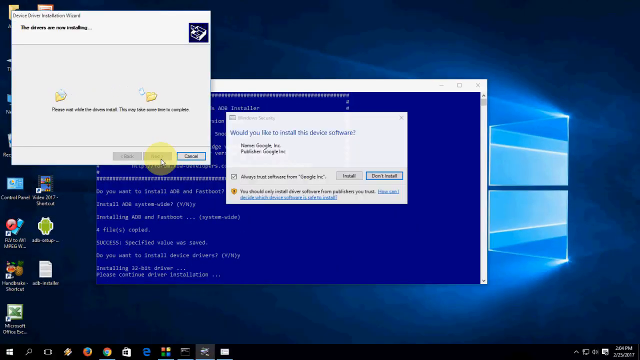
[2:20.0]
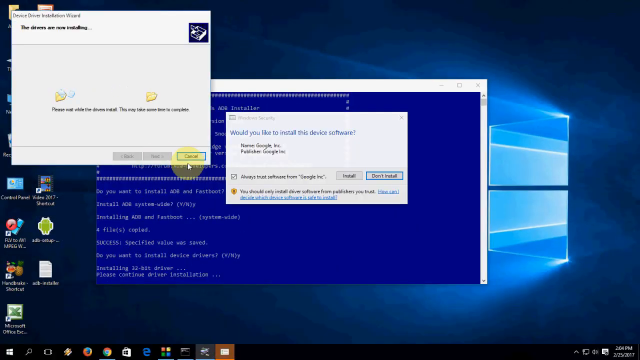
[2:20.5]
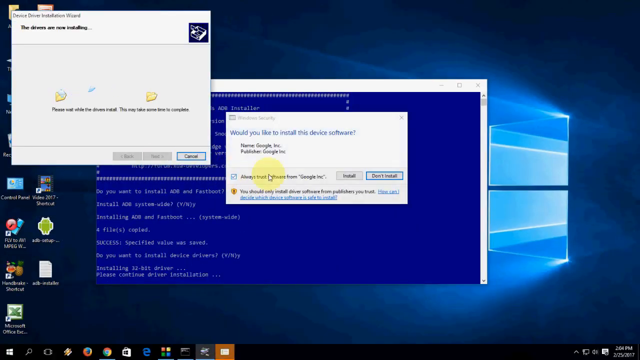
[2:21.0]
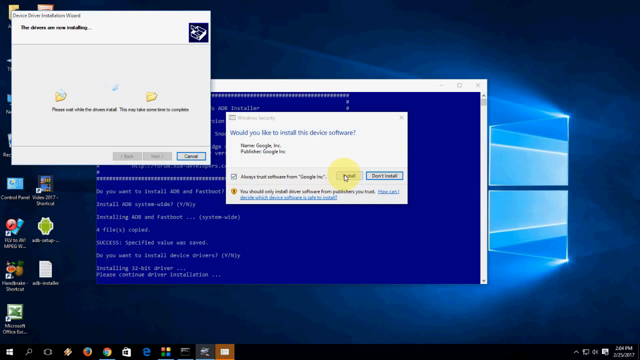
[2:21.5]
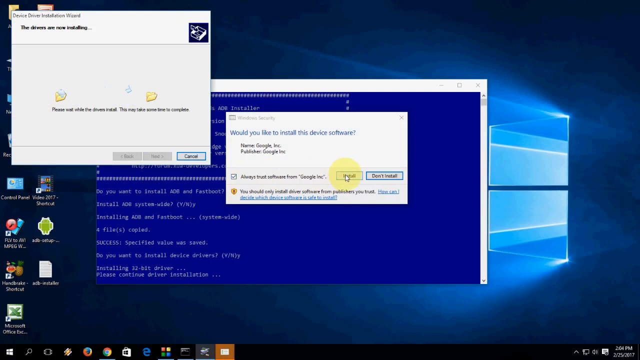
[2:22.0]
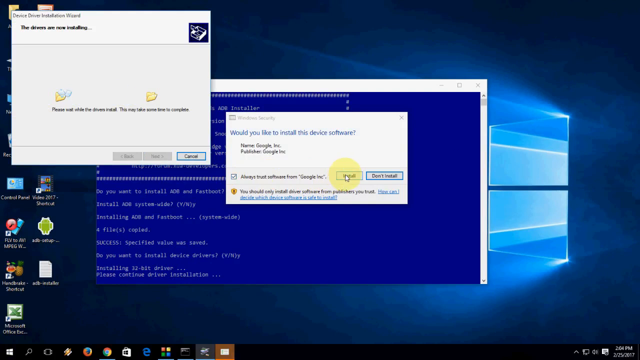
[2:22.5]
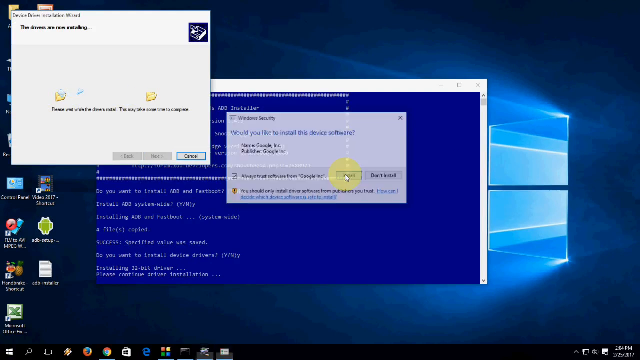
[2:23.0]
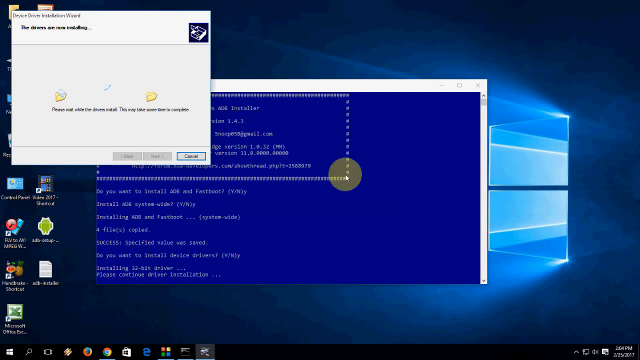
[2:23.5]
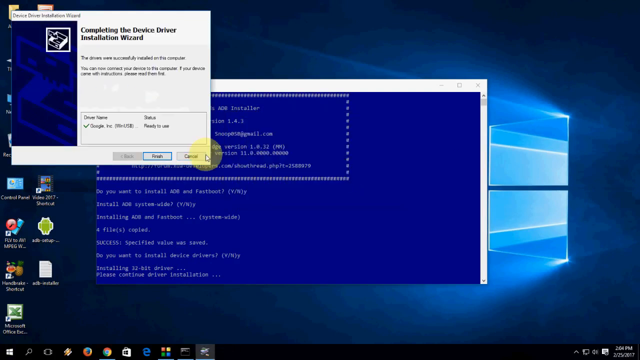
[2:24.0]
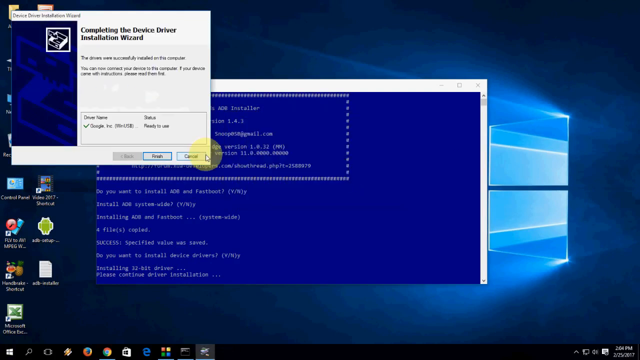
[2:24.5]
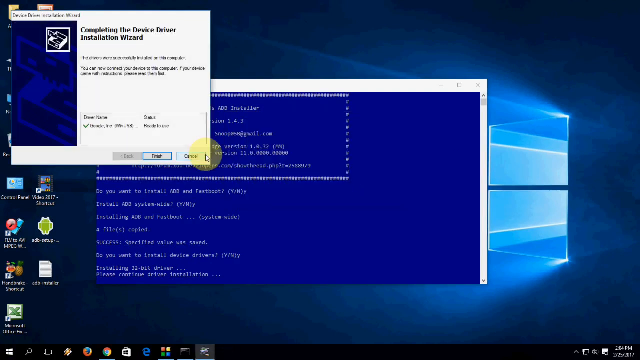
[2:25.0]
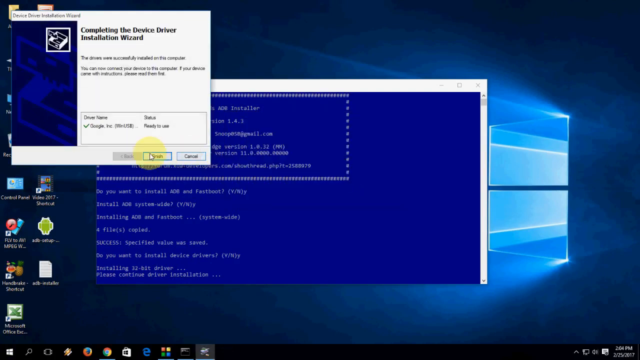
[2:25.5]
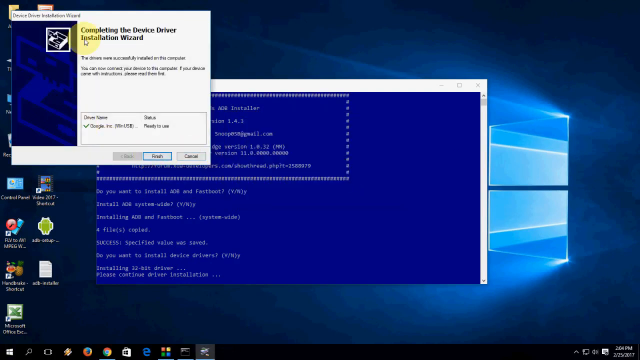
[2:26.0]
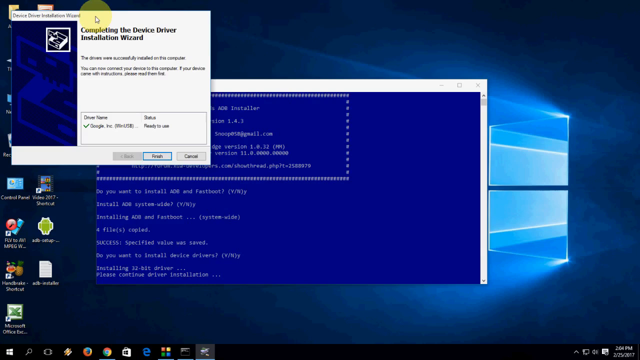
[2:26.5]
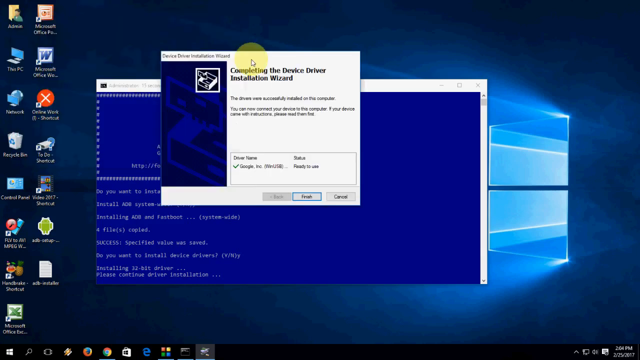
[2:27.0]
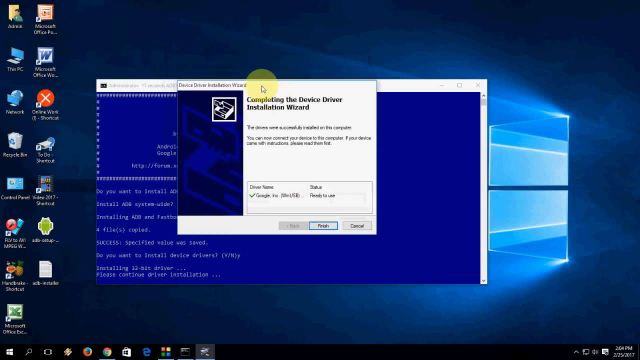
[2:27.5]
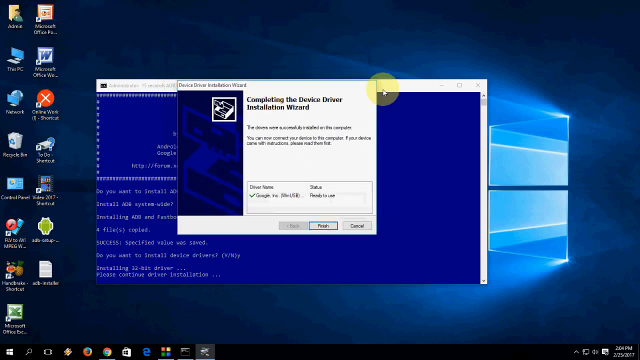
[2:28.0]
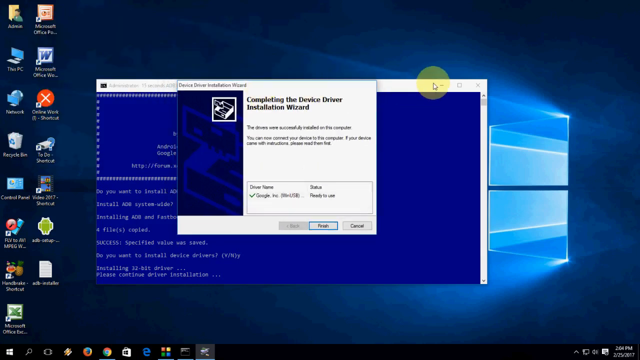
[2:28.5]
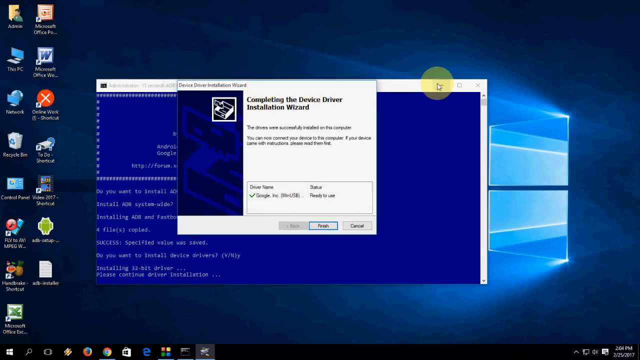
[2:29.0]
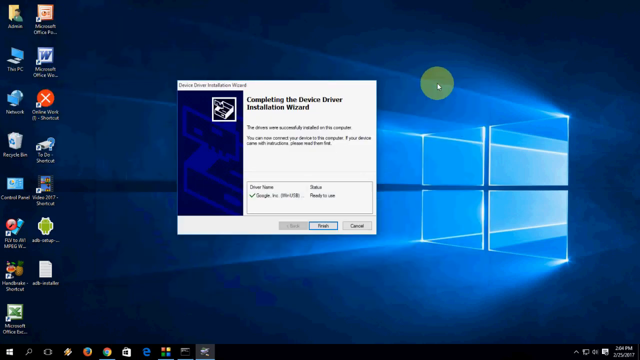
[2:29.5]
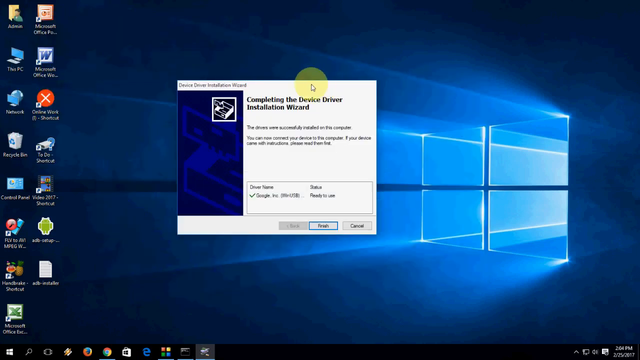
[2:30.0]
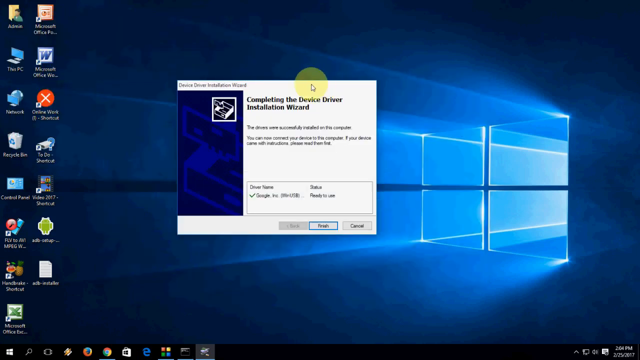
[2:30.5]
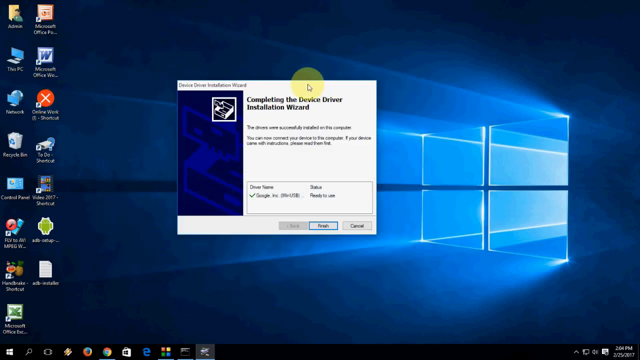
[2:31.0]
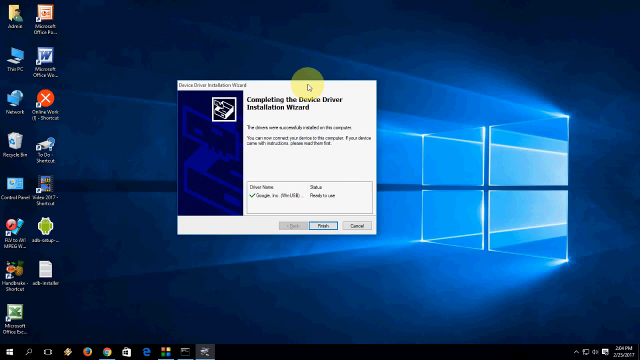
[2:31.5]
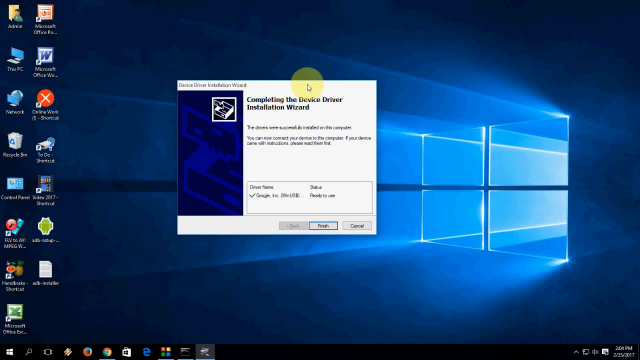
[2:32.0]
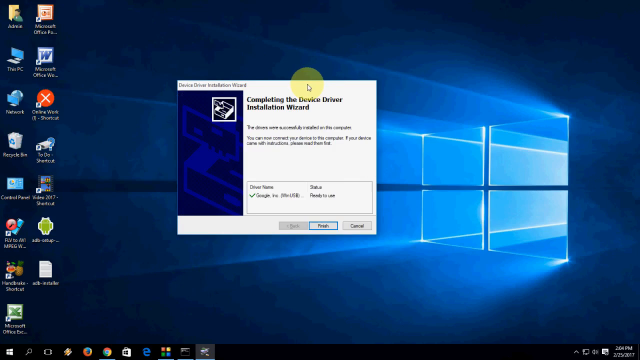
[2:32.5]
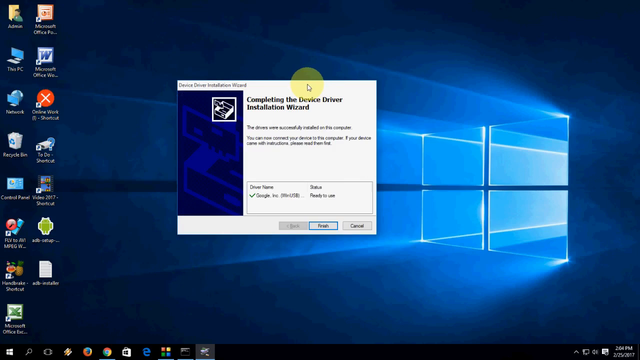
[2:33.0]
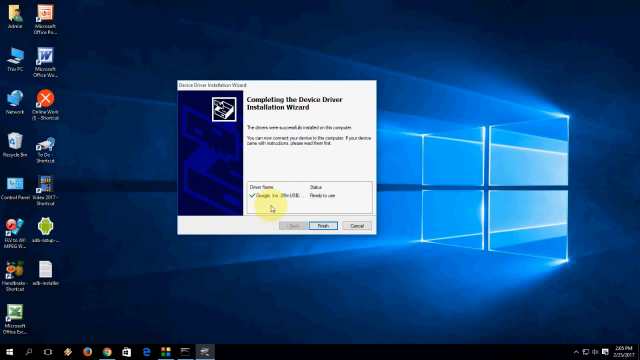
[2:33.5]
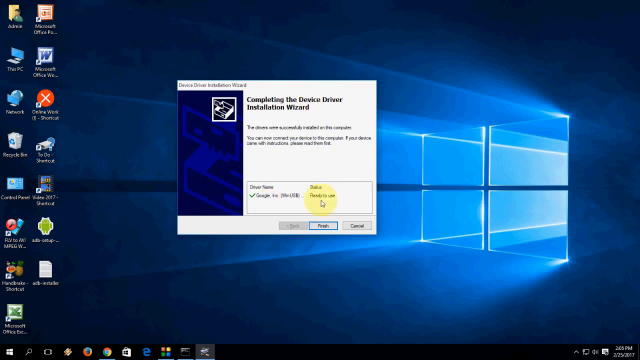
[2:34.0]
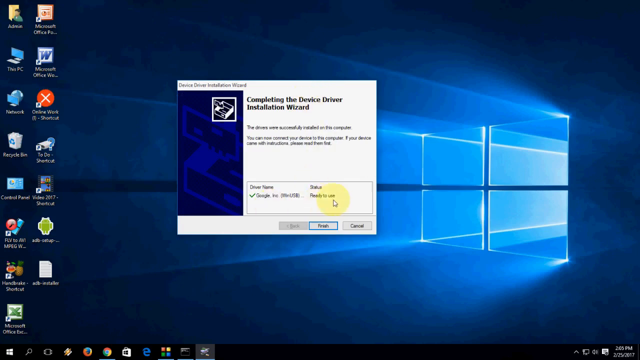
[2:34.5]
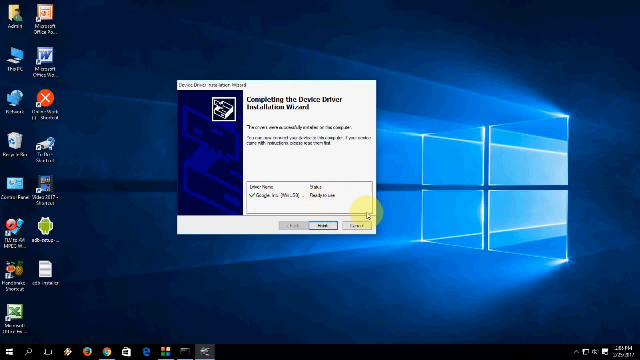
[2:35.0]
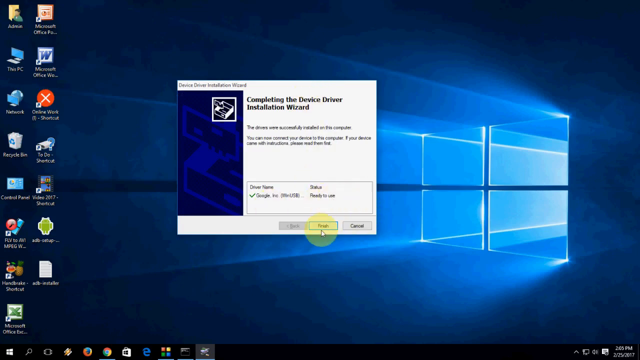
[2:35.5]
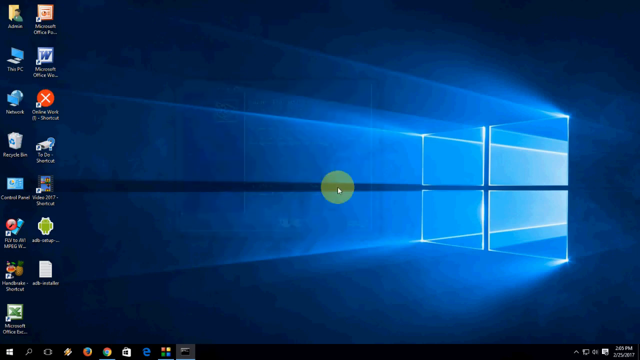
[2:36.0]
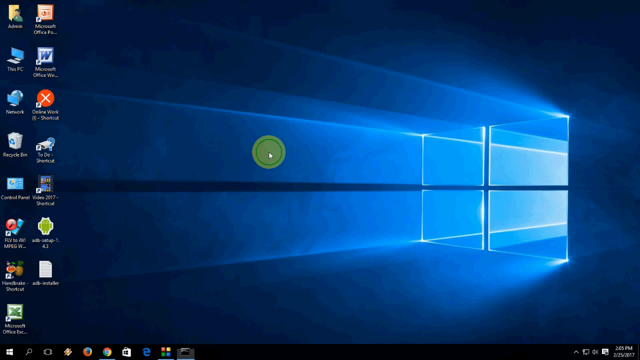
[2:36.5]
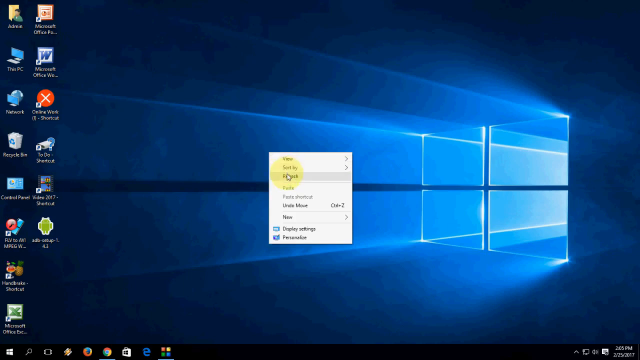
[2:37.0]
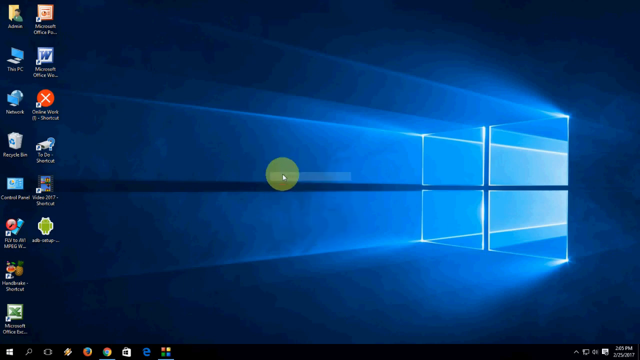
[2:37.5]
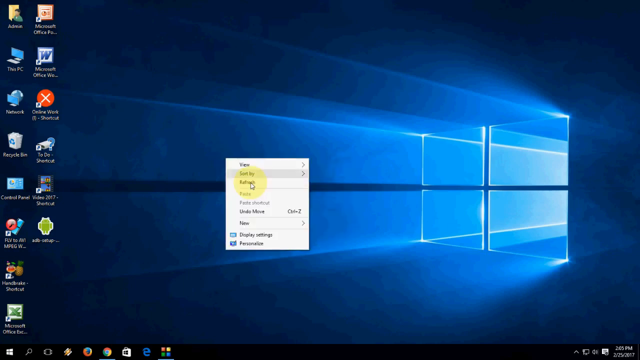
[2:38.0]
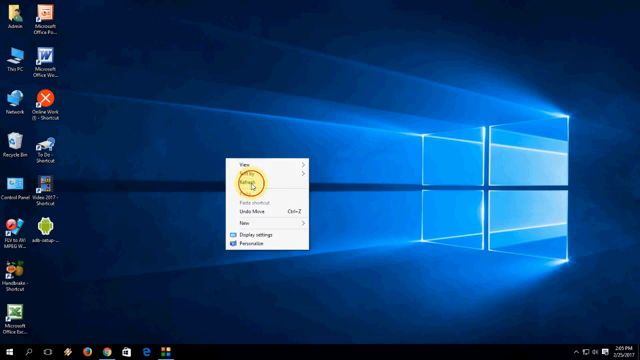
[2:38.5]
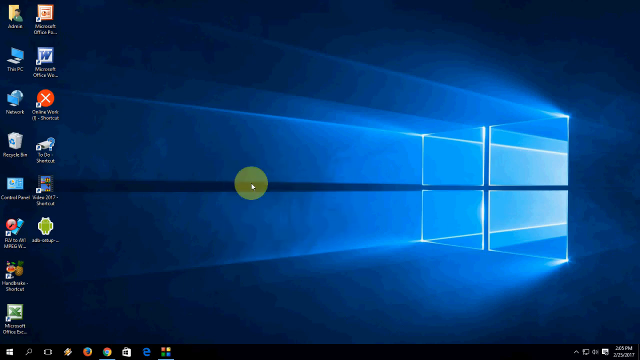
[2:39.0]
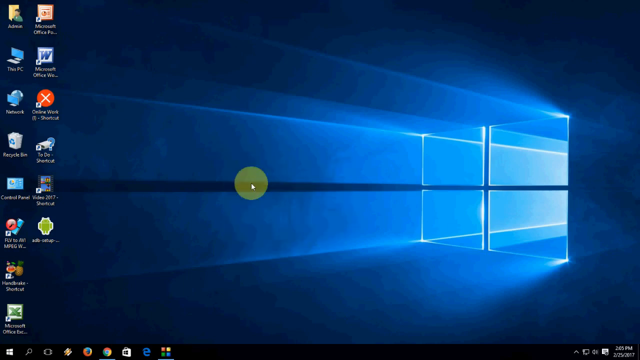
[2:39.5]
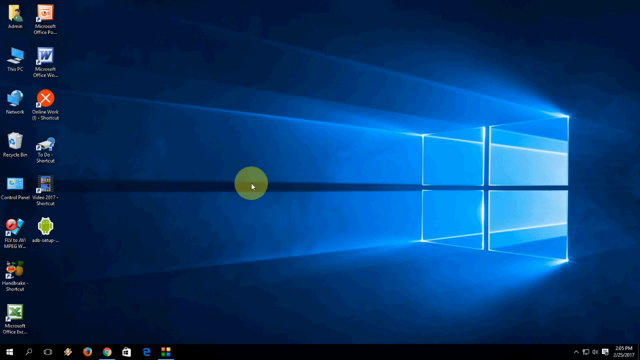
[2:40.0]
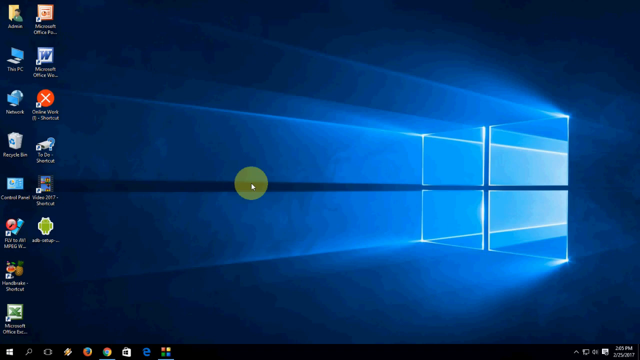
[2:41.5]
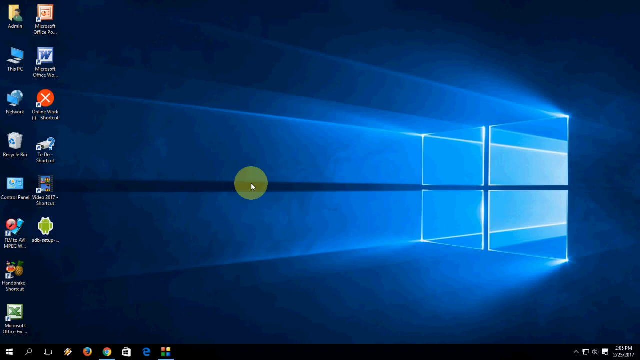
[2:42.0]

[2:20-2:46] The installation window for the ADB drivers is on screen, again showing the animated image of two folders with files being transferred from one to the other. A secondary window pops up, and the user reviews it and makes selections. The blue 15 Second ADB installer window is visible in the background as the installation completes. The windows then close, and the user moves the cursor back to the home screen, clicks on the empty center of the screen, and navigates the drop-down menus that appear.